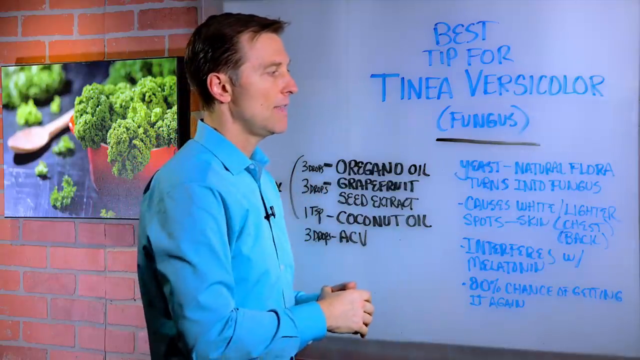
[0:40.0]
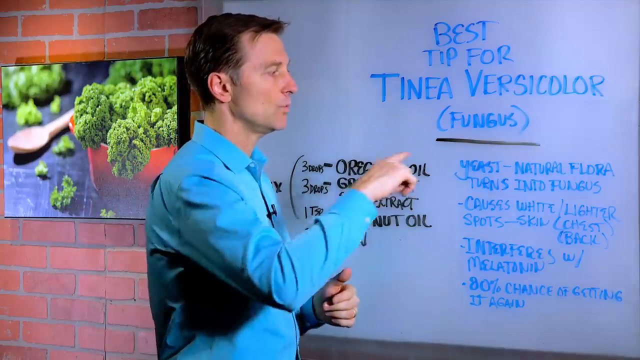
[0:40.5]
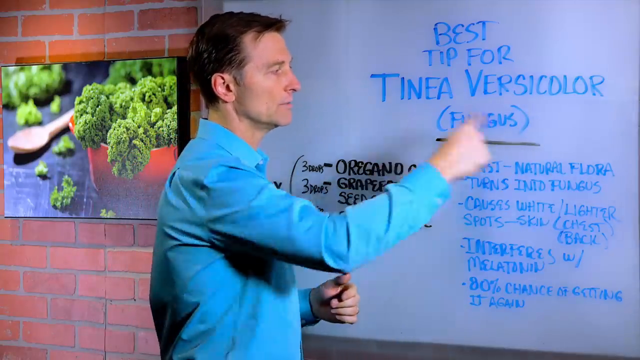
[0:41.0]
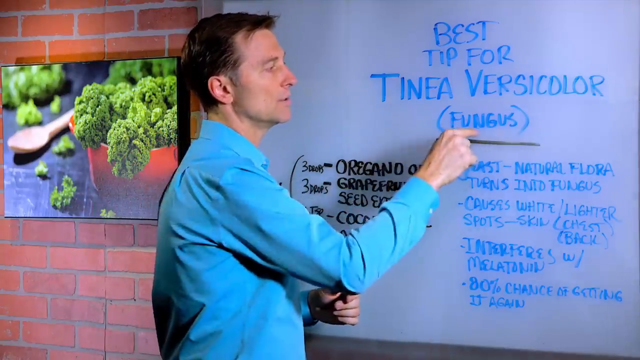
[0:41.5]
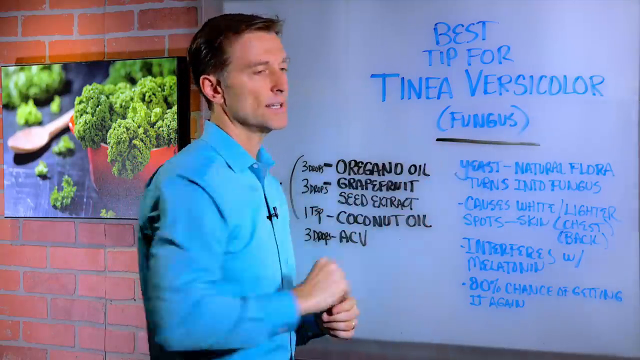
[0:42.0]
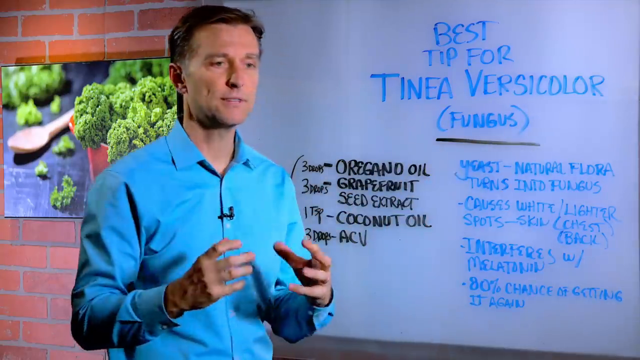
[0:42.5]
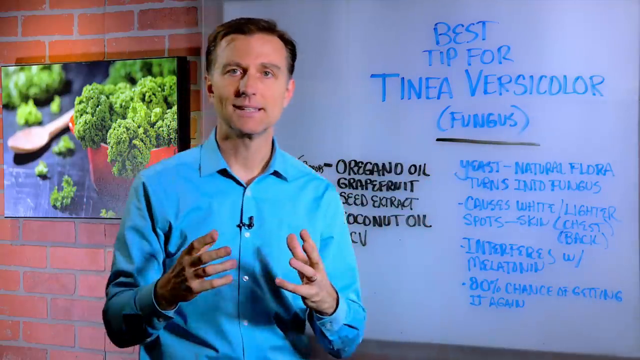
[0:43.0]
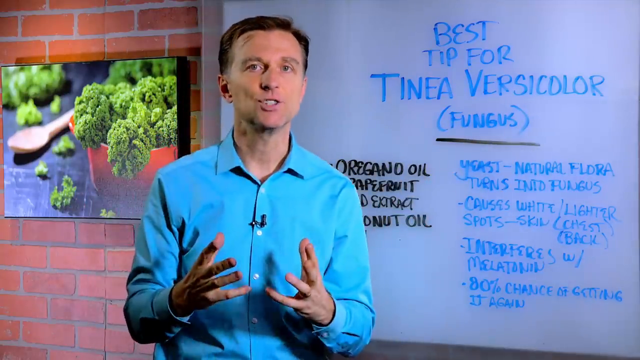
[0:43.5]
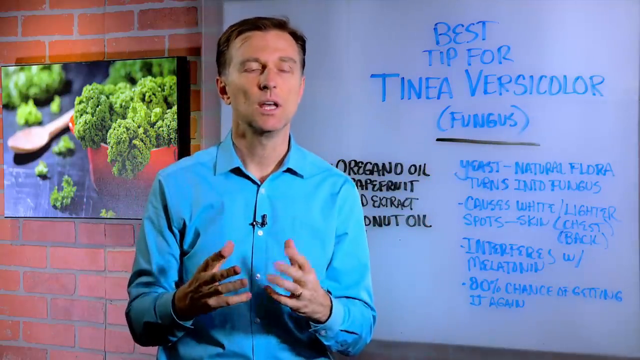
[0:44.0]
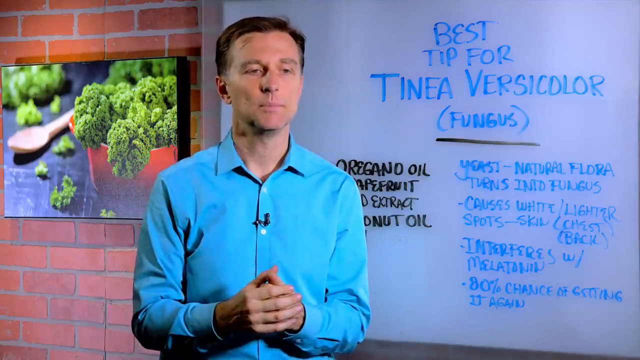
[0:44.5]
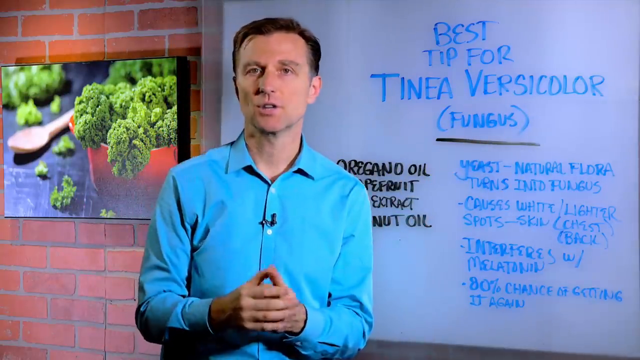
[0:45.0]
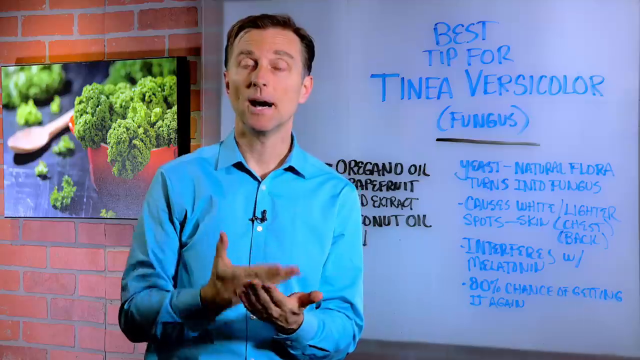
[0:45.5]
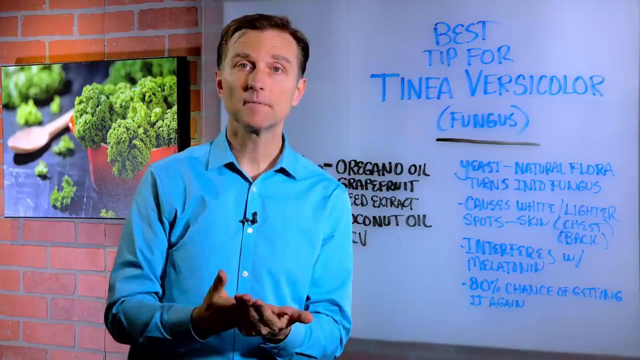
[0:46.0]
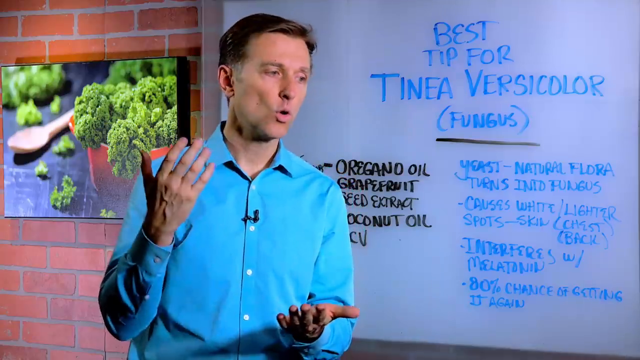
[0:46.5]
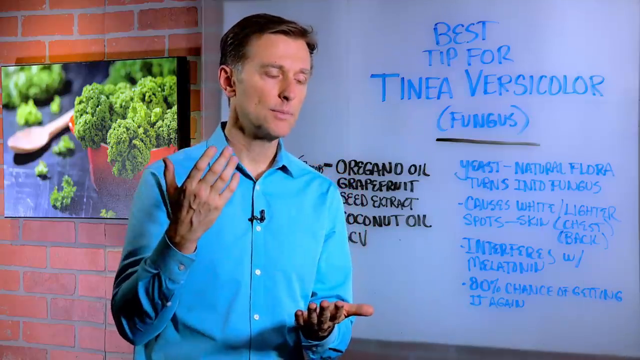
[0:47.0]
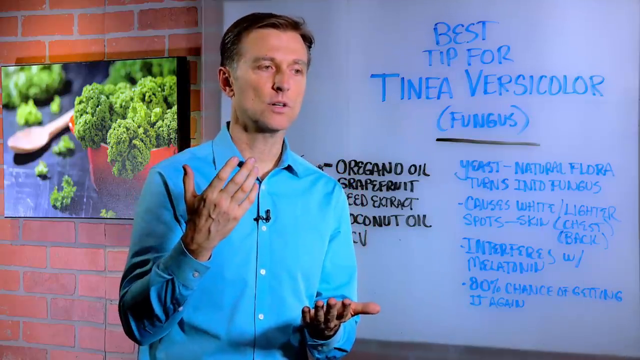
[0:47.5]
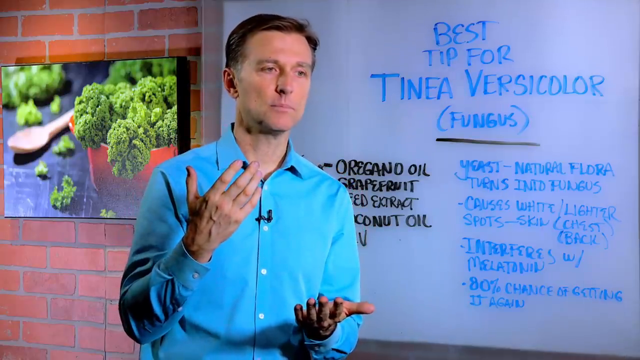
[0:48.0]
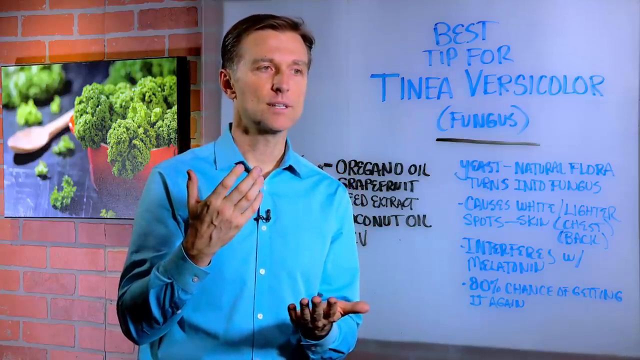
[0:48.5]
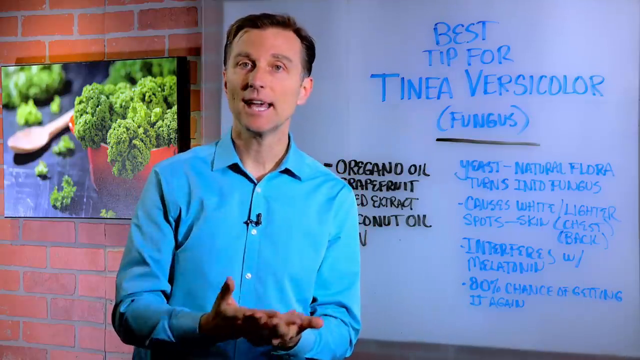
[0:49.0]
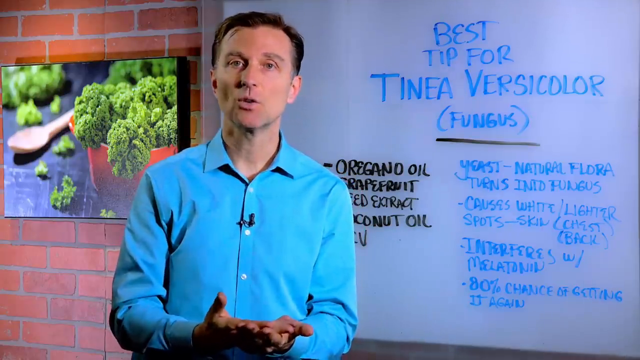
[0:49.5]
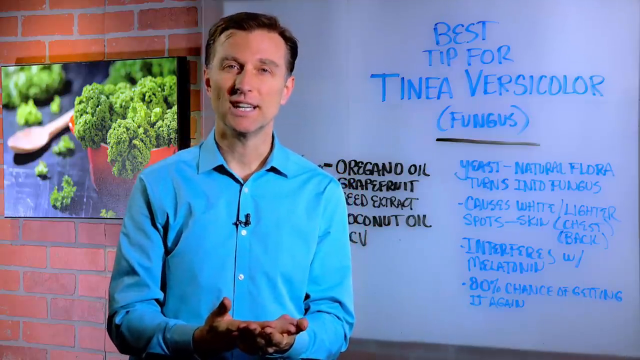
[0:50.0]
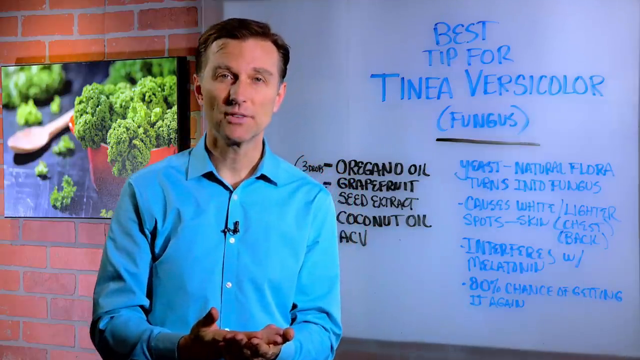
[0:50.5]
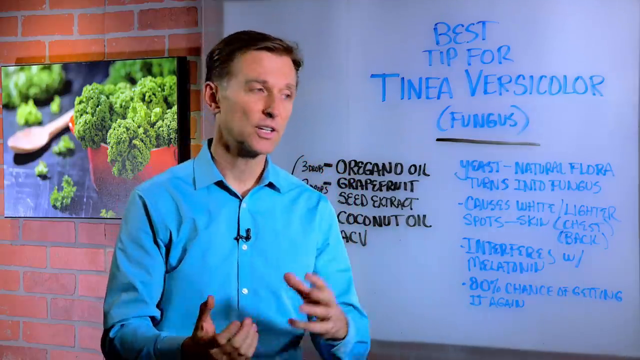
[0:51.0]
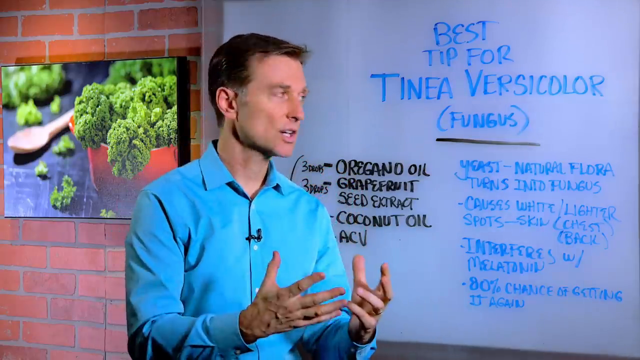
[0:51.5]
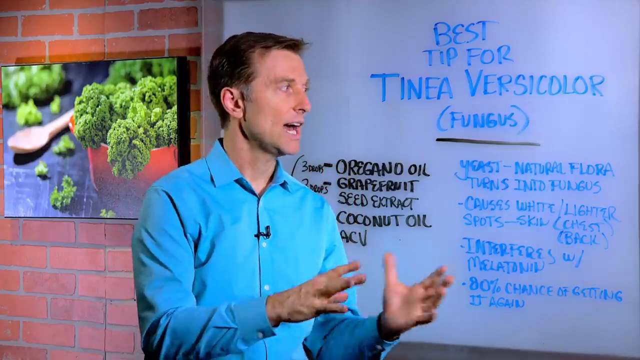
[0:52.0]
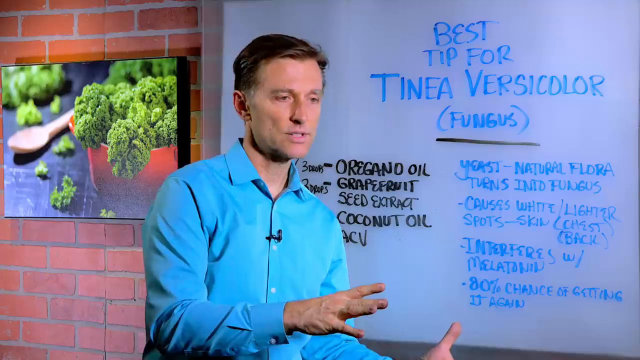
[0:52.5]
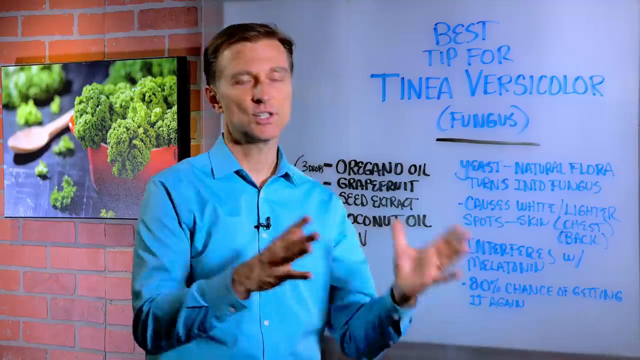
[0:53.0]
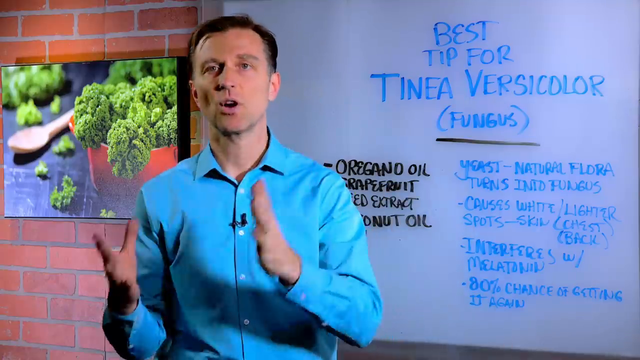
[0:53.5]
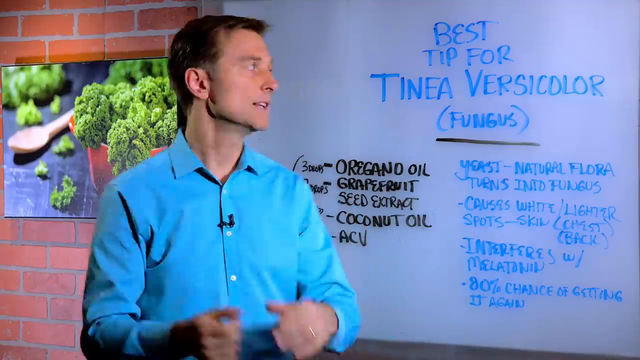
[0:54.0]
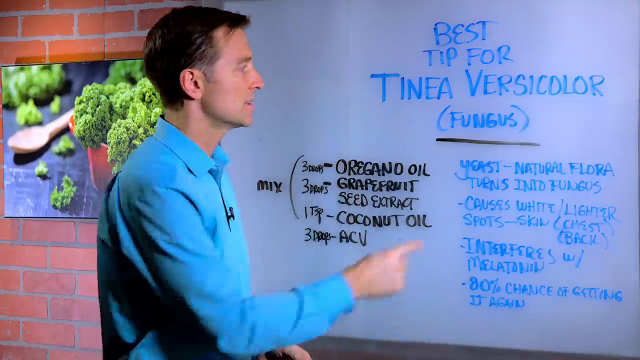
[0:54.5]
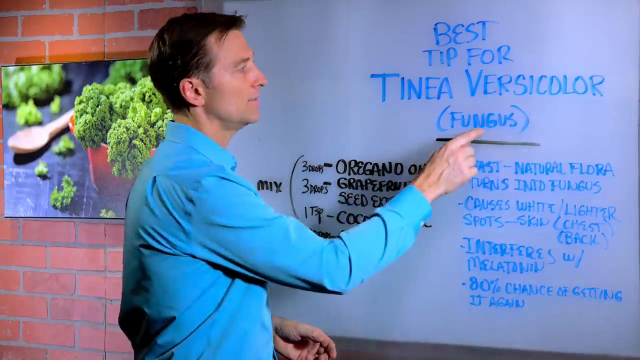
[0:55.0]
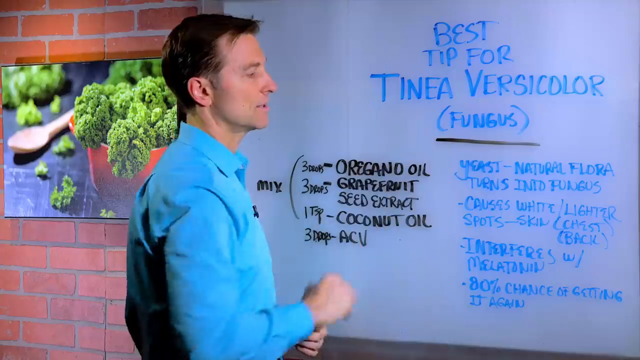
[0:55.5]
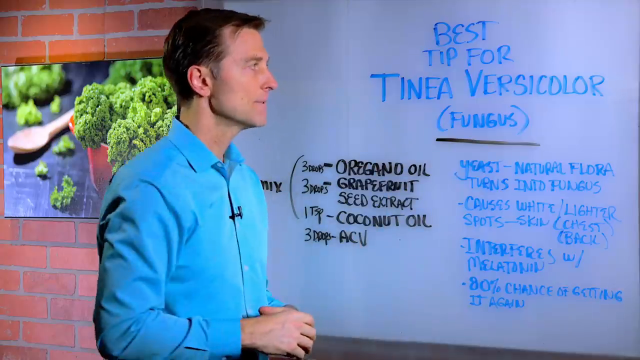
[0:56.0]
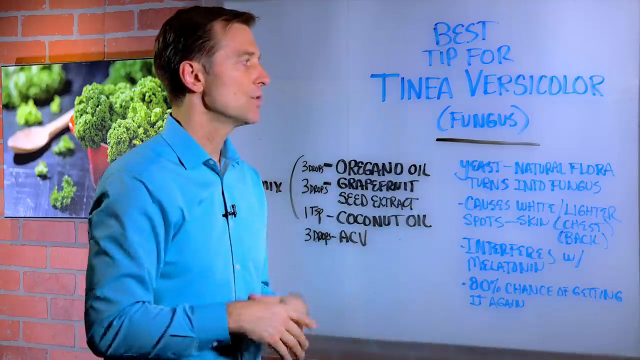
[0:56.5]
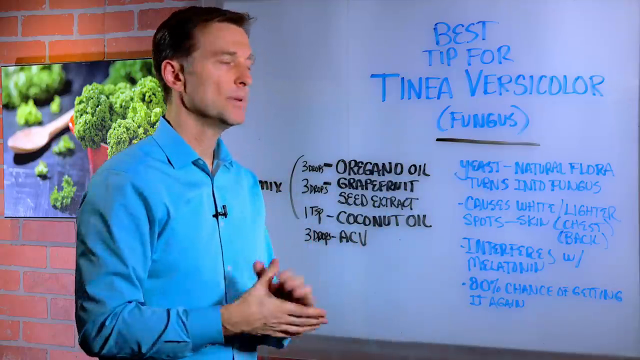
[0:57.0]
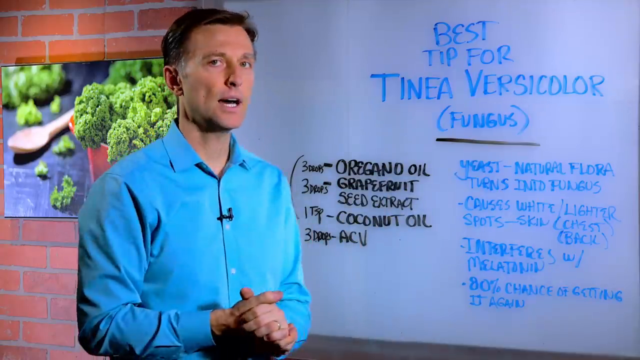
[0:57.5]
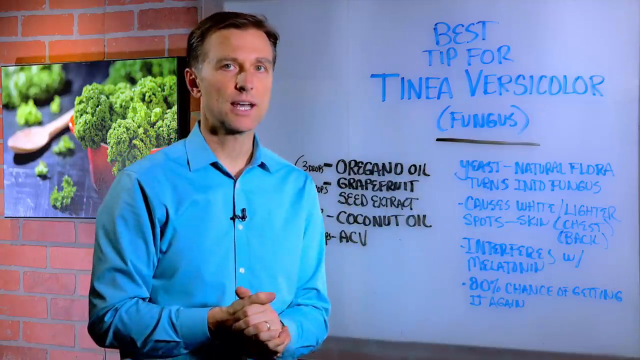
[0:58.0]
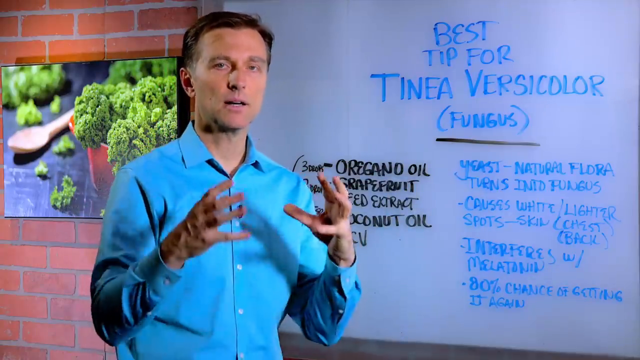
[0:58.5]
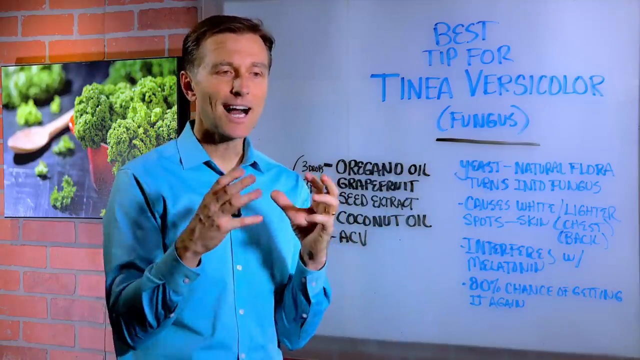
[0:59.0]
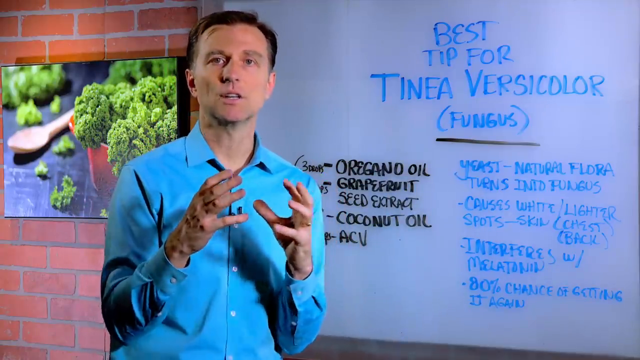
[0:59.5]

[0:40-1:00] The same man in the bright blue shirt points toward the blue writing on the board that says fungus in brackets. For the rest of the shot he talks to the camera, motioning a lot with his hands. He brings his two hands together in a slapping motion, then moves his hands from one point to another as if something moves or evolves. He points to fungus again and turns back to the camera, continuing to talk and emphasising with his hands. He only looks toward the blue bracketed word fungus and does not refer to any of the other dot points on the board.